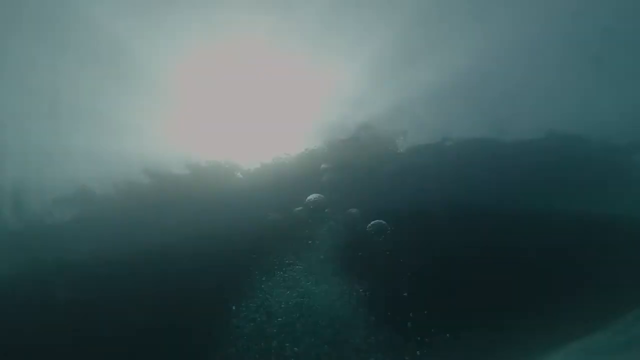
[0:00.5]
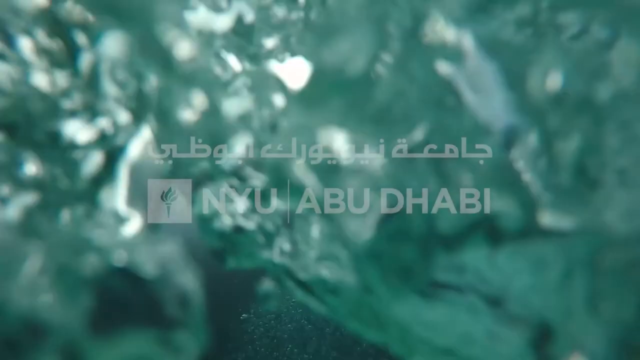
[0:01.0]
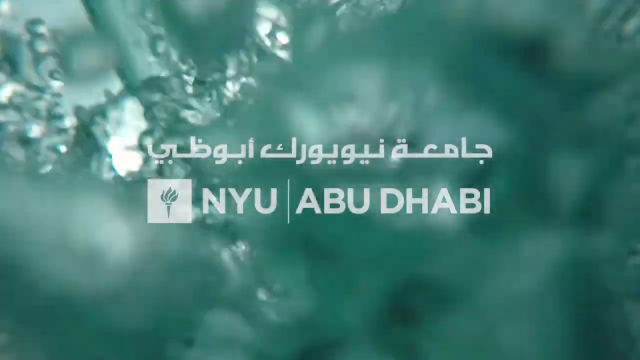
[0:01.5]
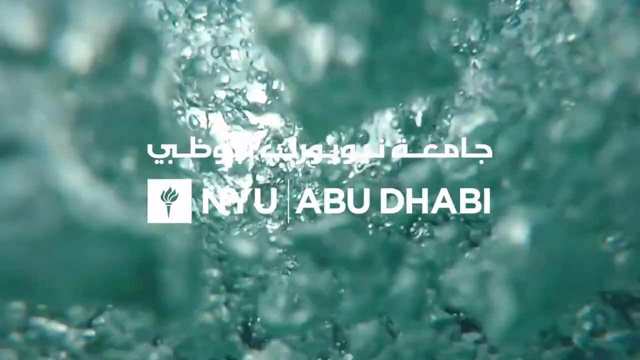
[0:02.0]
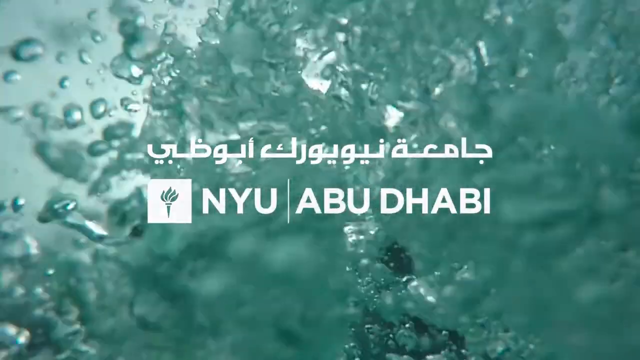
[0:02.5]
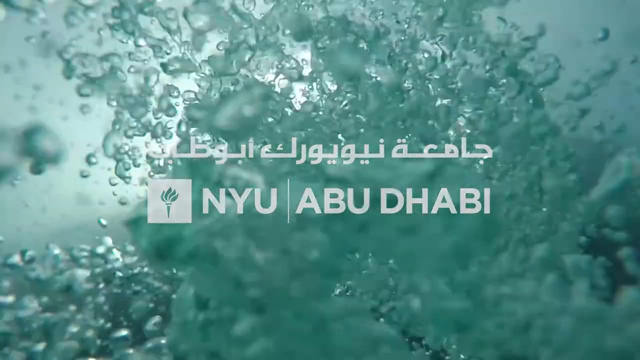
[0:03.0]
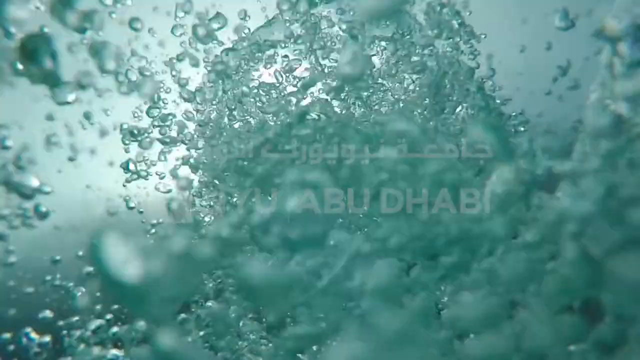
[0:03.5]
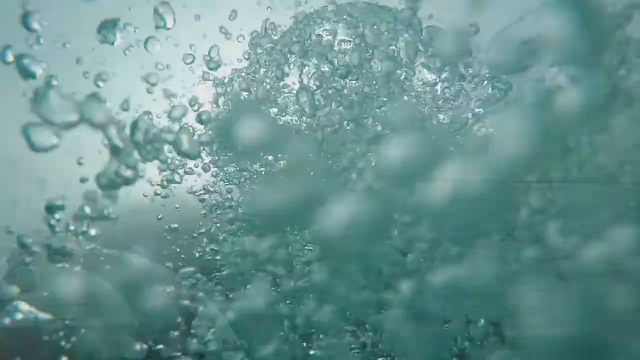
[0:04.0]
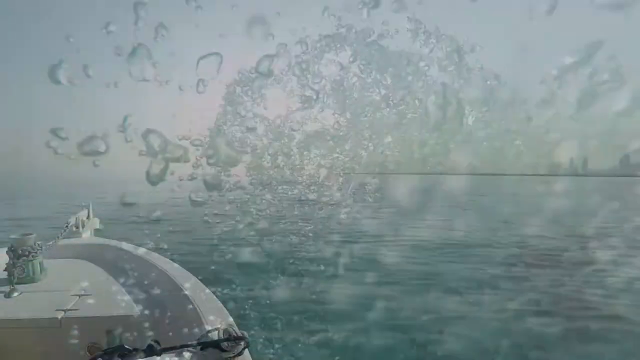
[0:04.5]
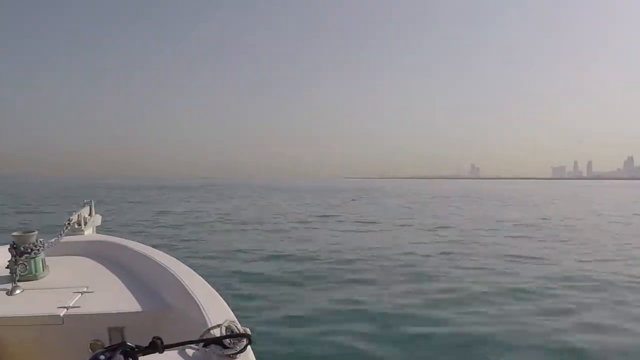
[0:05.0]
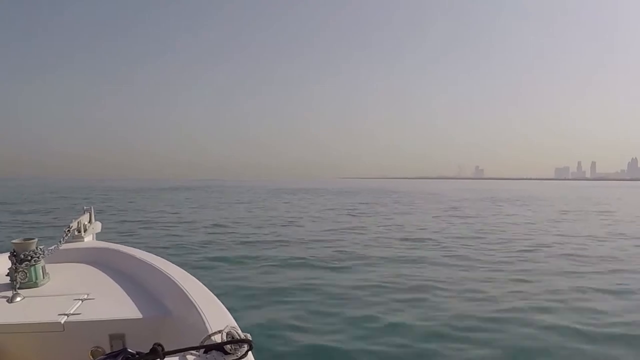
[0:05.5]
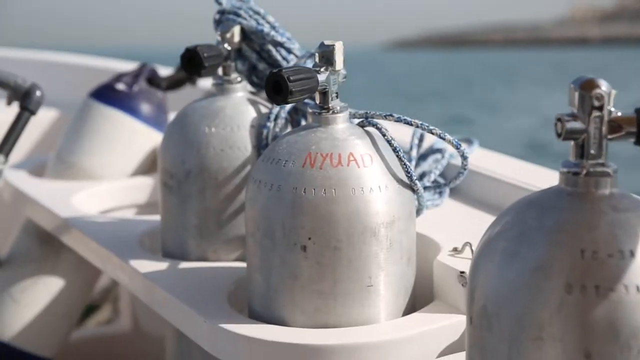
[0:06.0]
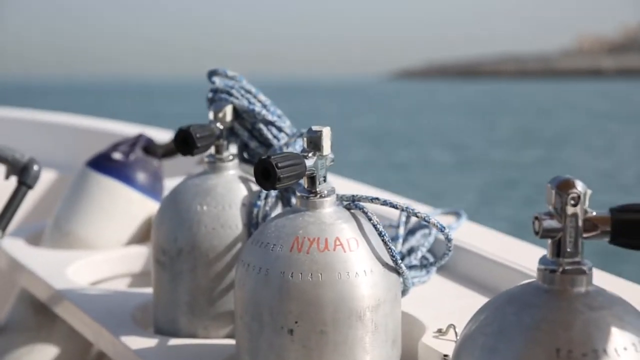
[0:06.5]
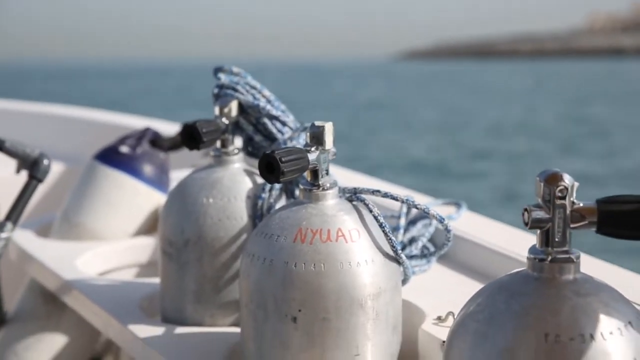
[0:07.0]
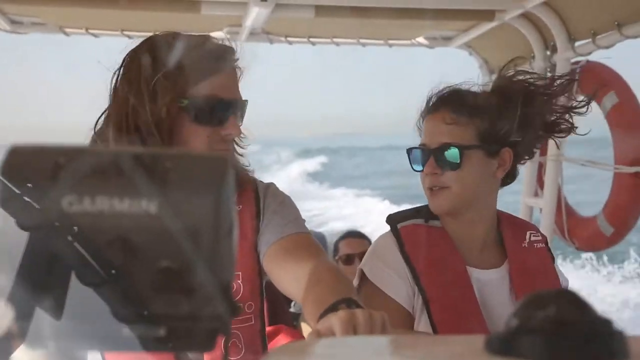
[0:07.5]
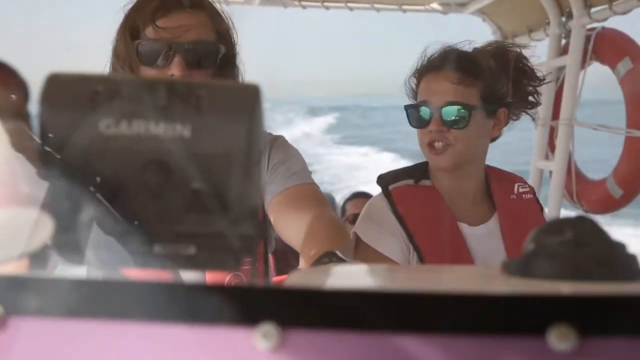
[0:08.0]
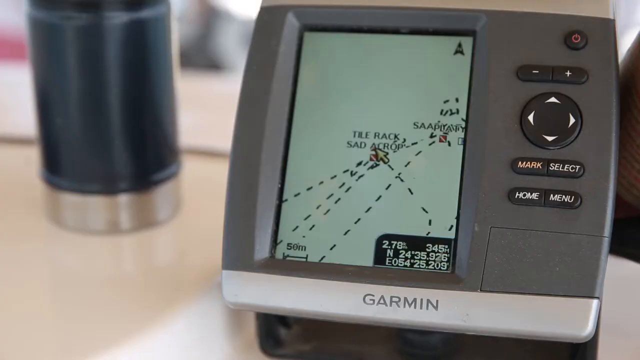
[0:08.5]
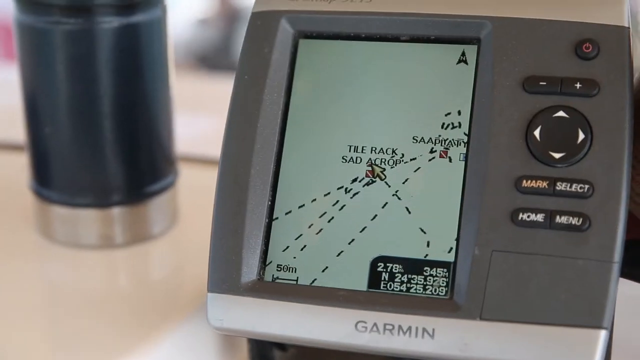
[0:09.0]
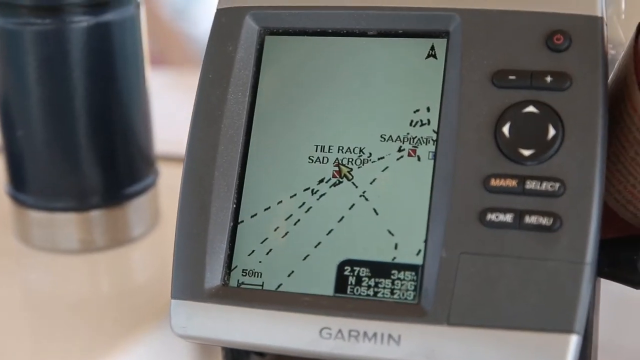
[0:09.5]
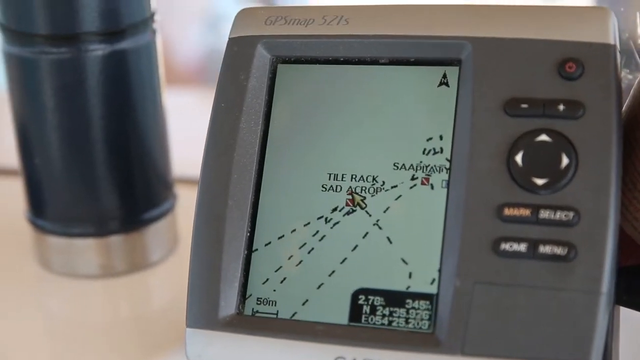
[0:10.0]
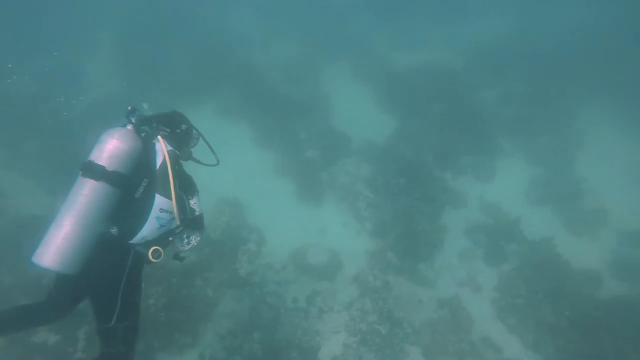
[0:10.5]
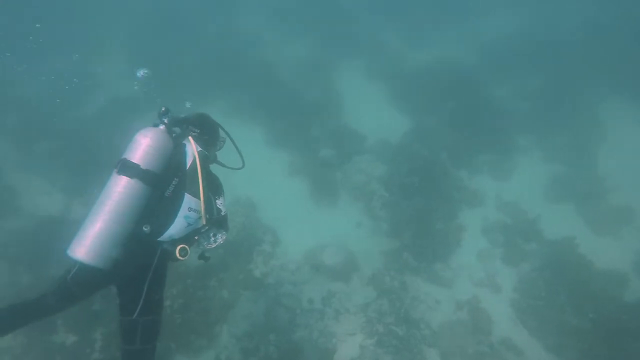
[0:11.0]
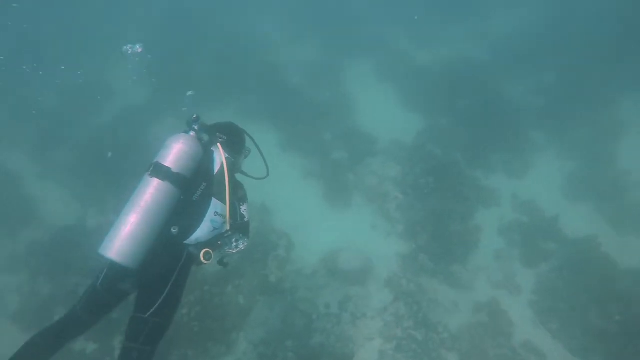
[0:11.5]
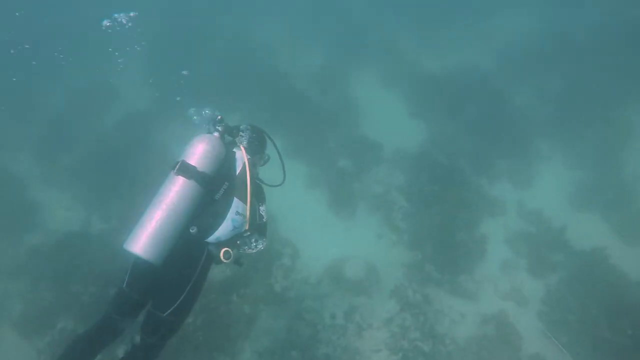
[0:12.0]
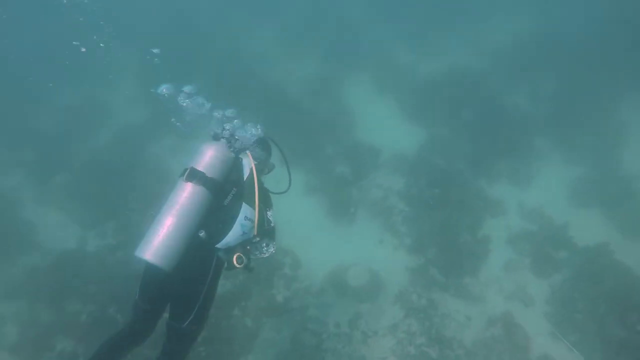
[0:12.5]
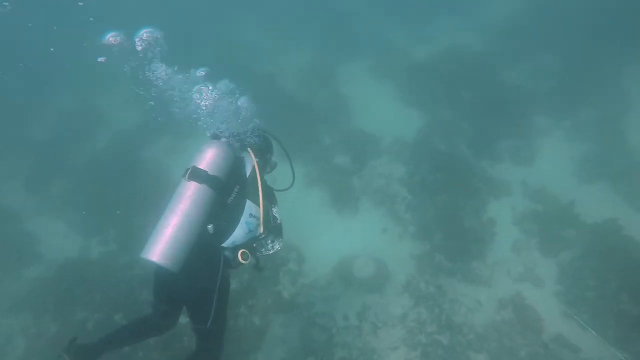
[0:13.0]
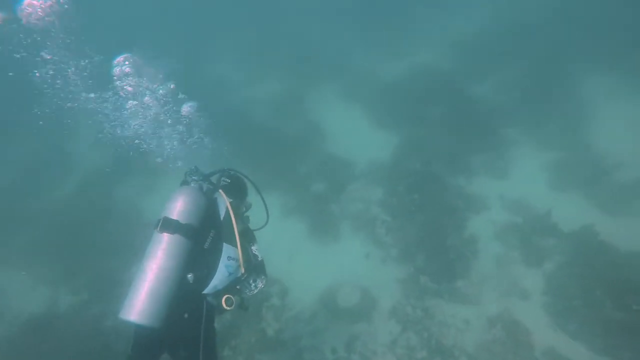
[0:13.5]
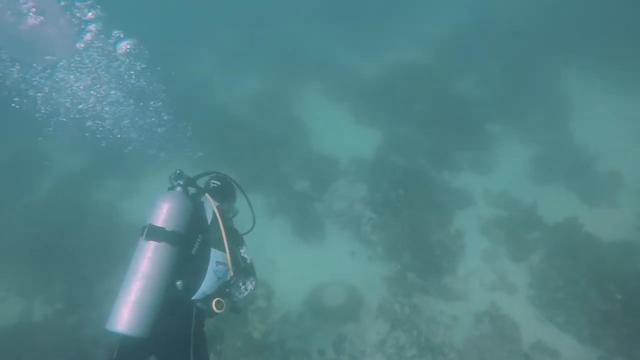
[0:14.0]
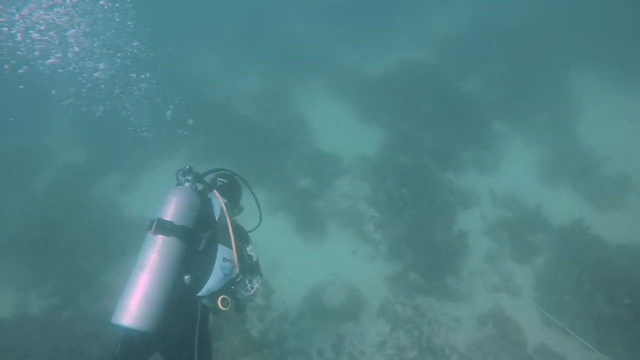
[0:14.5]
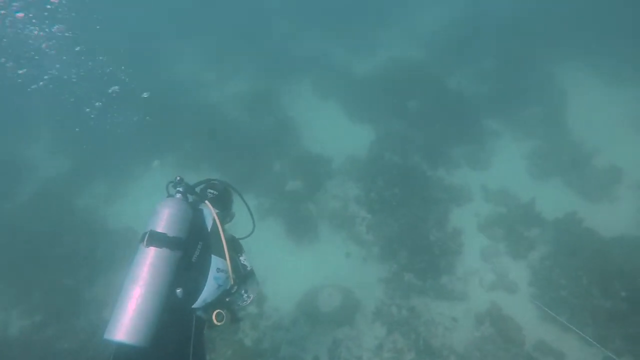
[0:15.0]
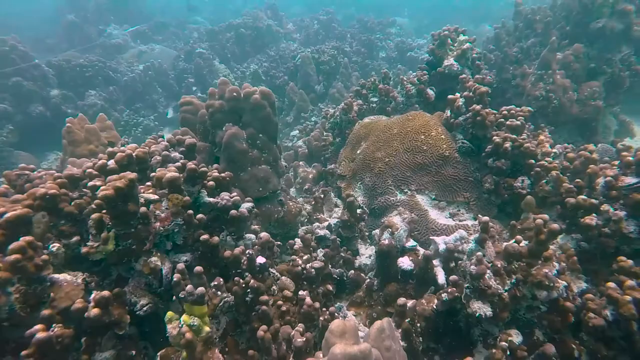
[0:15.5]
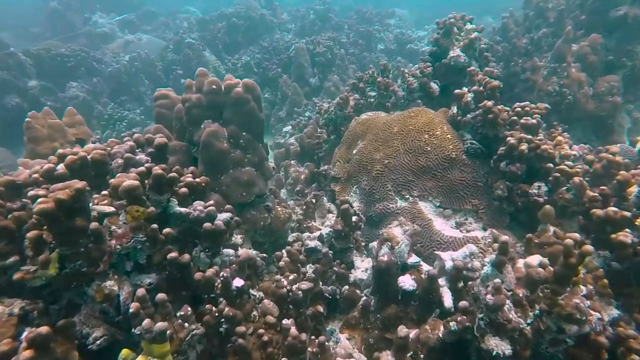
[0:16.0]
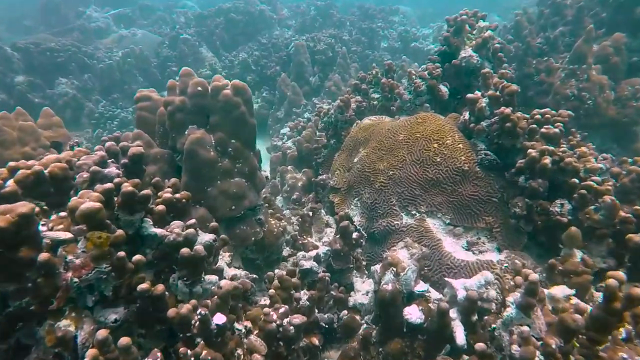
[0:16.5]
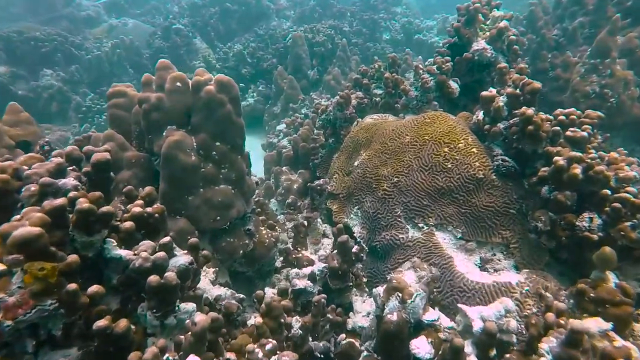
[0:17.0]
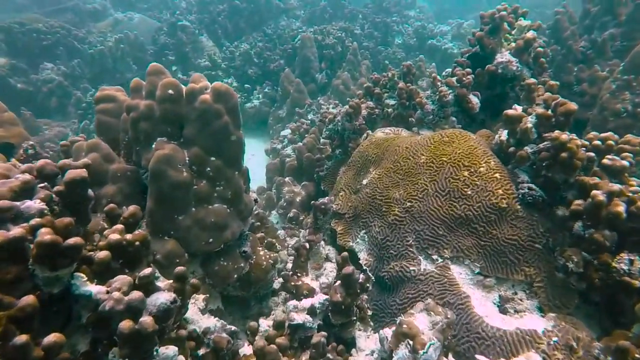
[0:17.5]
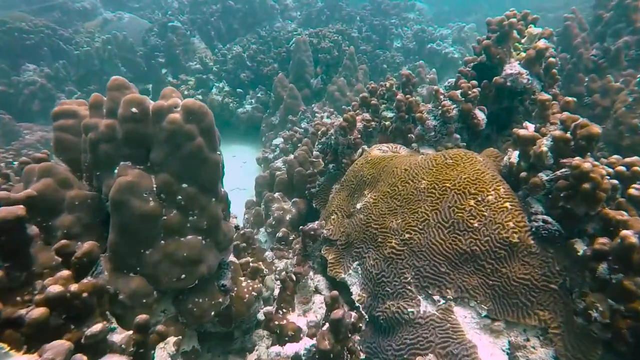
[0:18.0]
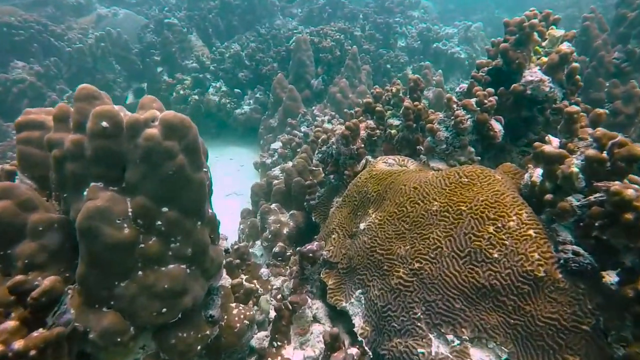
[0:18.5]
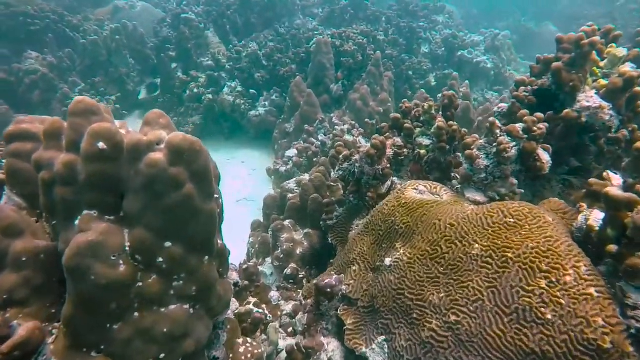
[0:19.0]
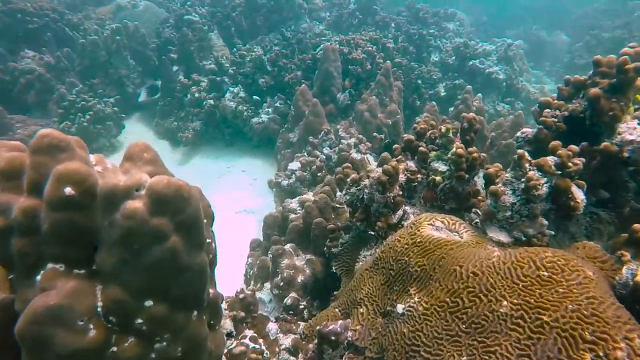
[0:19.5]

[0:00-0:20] Water and bubbles appear underwater while white text pops up that includes "Abu Dhabi"; the top part of the text is in an unrecognized language. Various shots follow. A boat drives in the ocean or sea, and the camera zooms in on air tanks inside the boat. Two people, either a man and a woman or two women (it is hard to tell), are driving the boat. They wear sunglasses, and the woman has on a life jacket of some kind. A circular lifesaver ring is on the side of the boat. The video cuts to some sort of navigation software that is on the boat, then to a person scuba diving underwater. The water is very murky with a green-turquoise hue. The diver wears full scuba gear with an air tank on their back, and bubbles come from the air tank. A sweeping shot then moves over the floor of the ocean or sea, which seems to be a reddish-brownish coral reef.